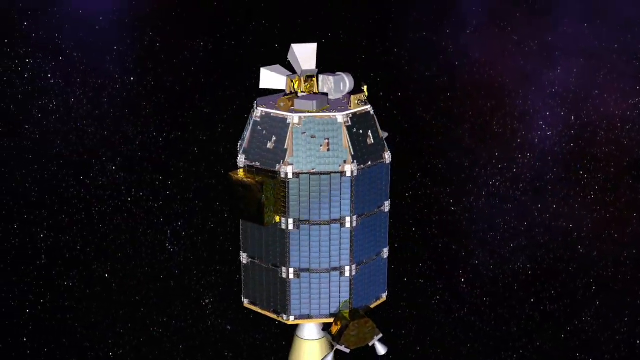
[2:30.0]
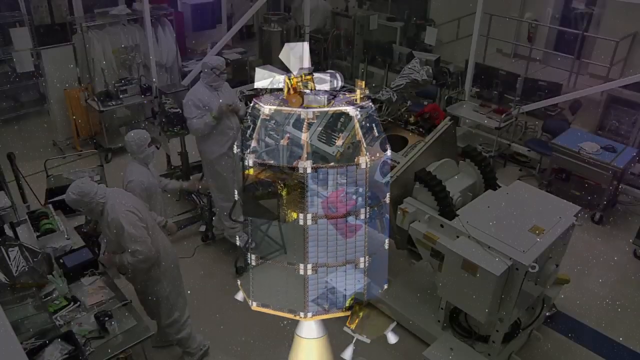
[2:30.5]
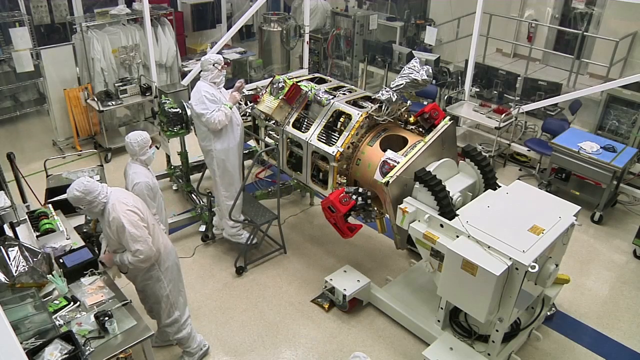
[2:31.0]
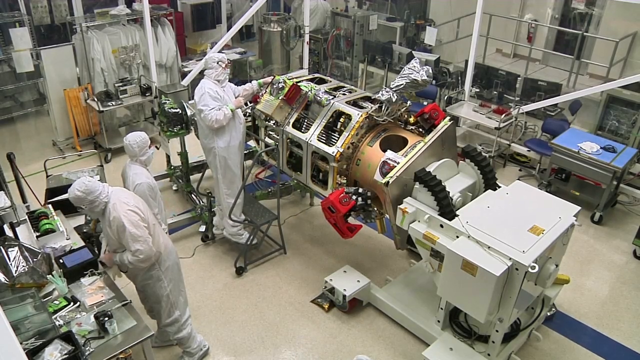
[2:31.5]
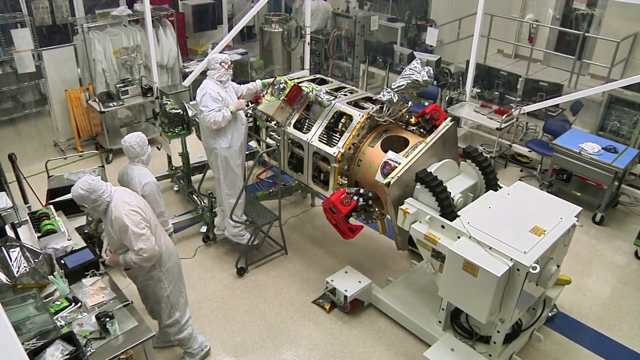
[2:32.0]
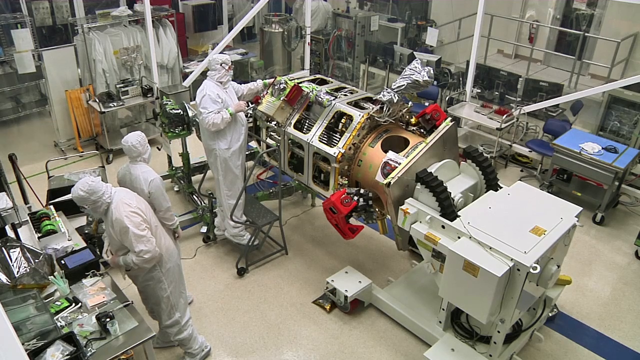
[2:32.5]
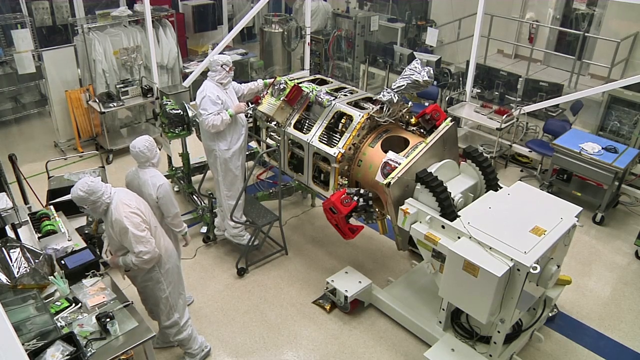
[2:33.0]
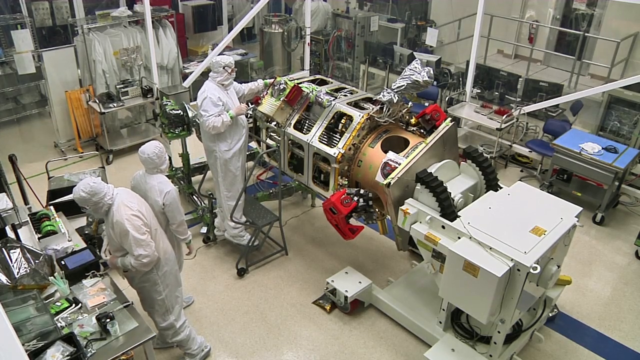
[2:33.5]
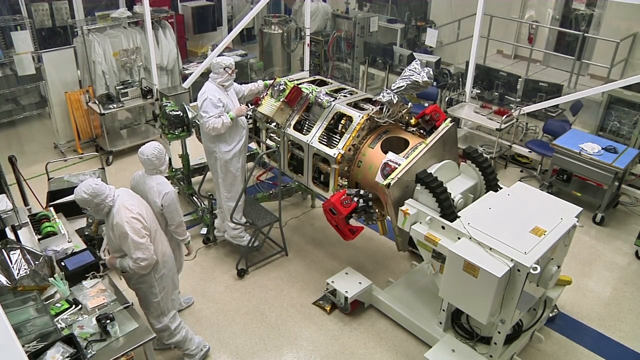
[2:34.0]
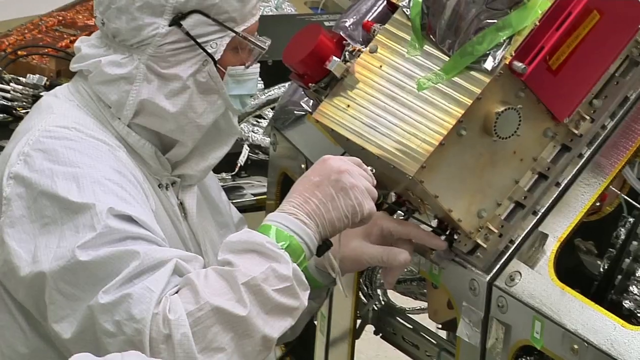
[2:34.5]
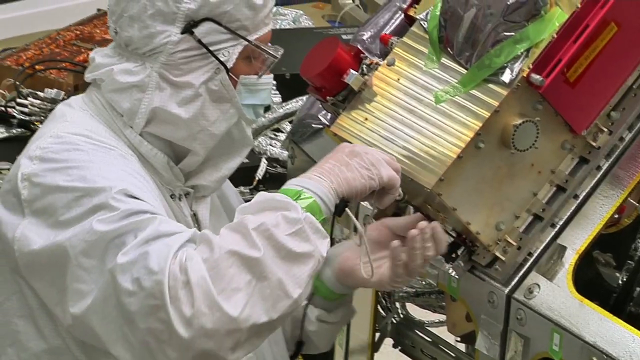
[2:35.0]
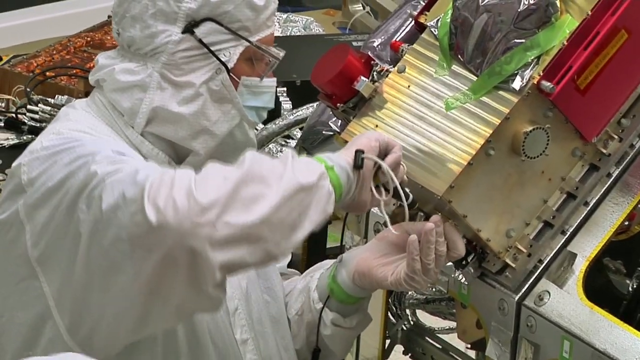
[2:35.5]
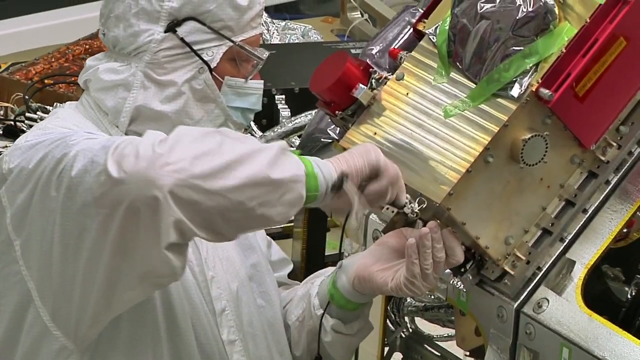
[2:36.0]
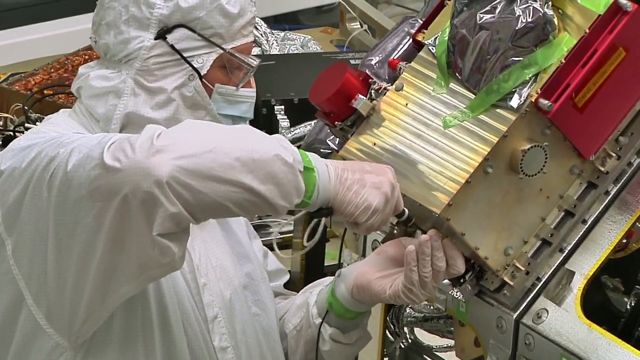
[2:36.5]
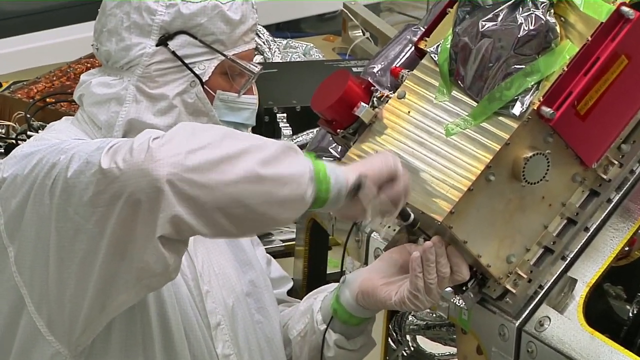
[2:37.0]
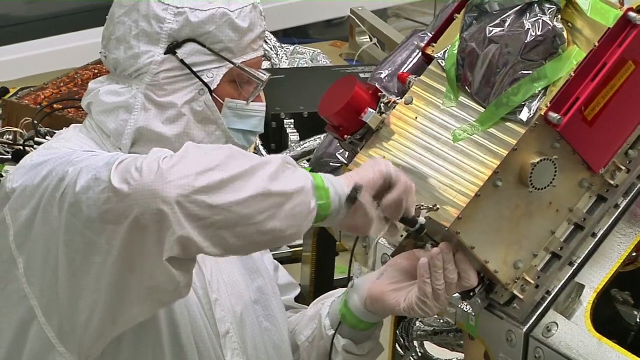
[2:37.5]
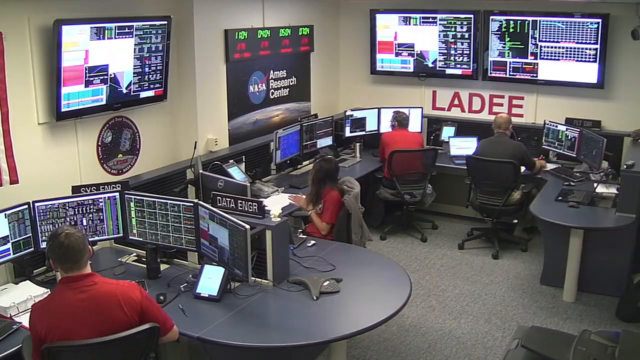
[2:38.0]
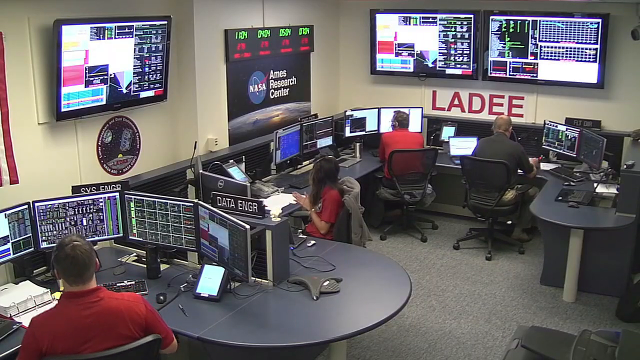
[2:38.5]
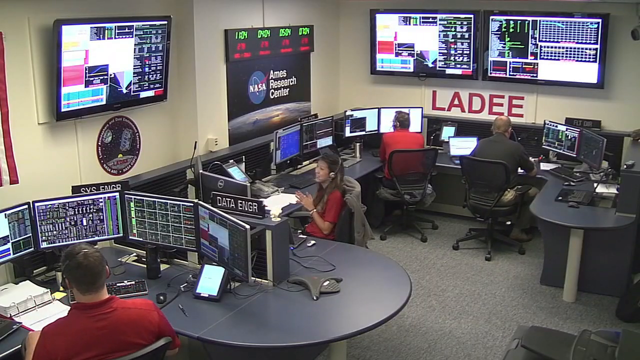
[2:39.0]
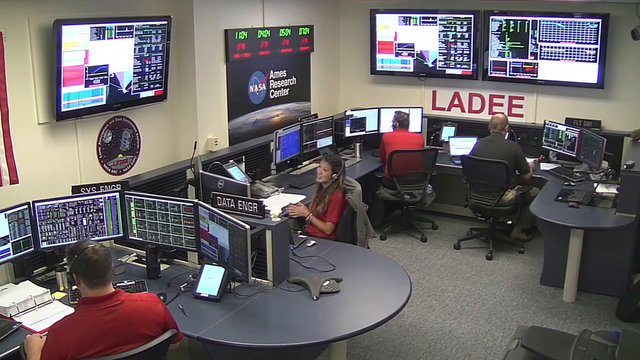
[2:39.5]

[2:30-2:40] An image shows a satellite orbiting in space. Then people appear fully covered head to toe in white protective jumpsuits, with latex gloves taped to the suits, protective goggles and face masks; the only opening is around their faces. They use tools to work on what appears to be the satellite. Next, people work in a NASA control station around computer screens; it is the LADEE station, with "Ames Research Center" on the wall and giant TV screens showing data and information. Four people are in the room, three next to each other around one cubicle and one in another little cubicle area. All wear headsets and seem to be talking and working; they appear to have keyboards in front of them, along with multiple monitors. One workstation has a title above it reading "data engineer", and another reads "system engineer".